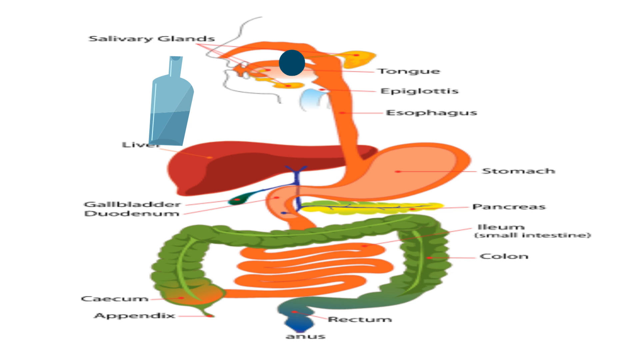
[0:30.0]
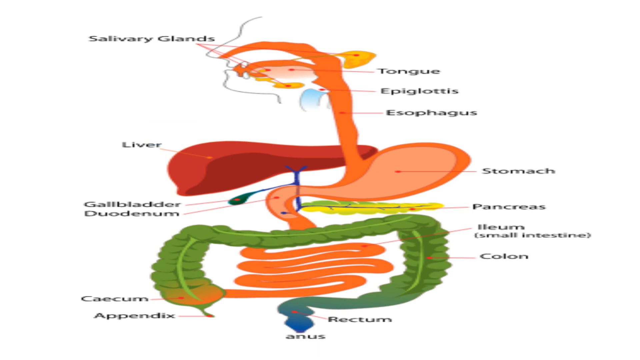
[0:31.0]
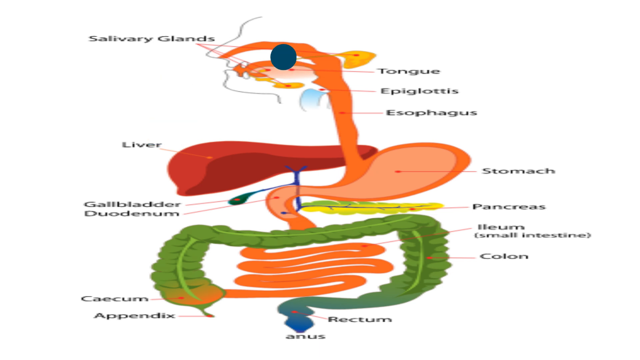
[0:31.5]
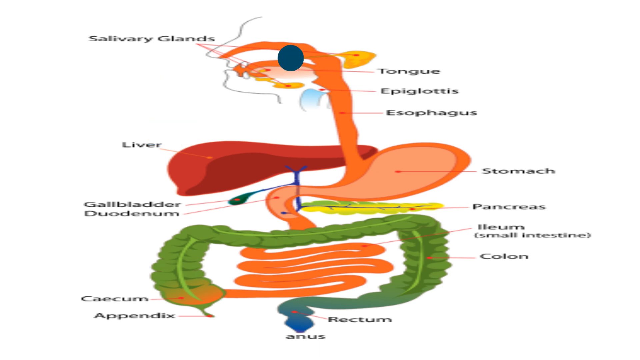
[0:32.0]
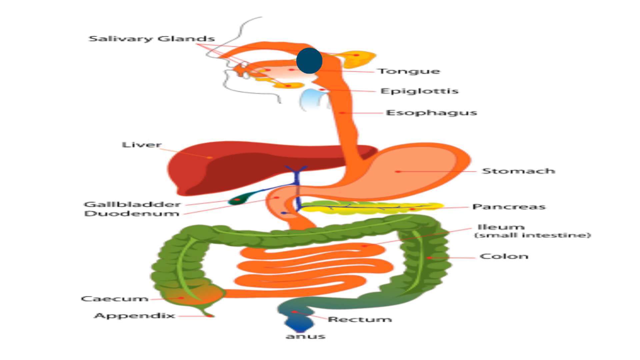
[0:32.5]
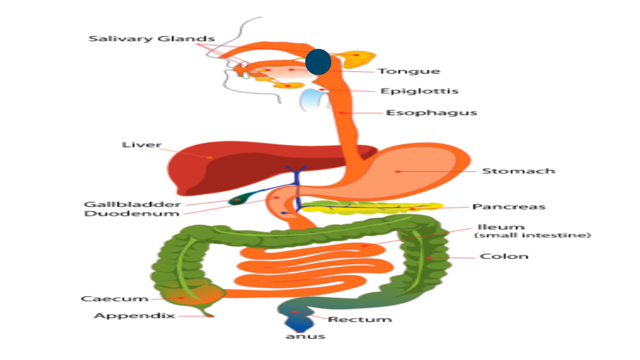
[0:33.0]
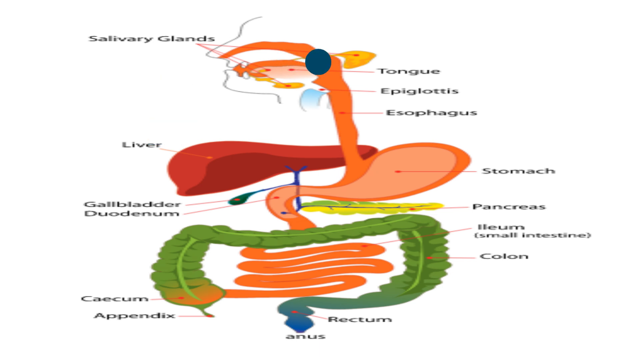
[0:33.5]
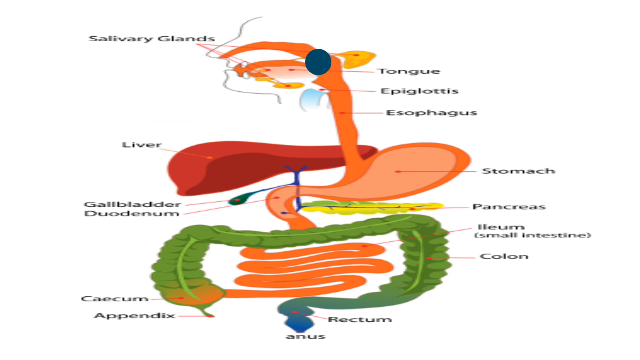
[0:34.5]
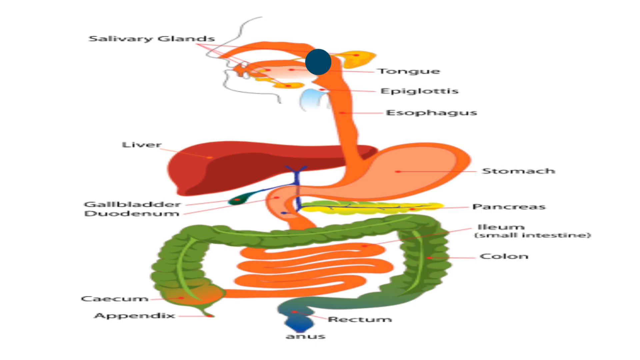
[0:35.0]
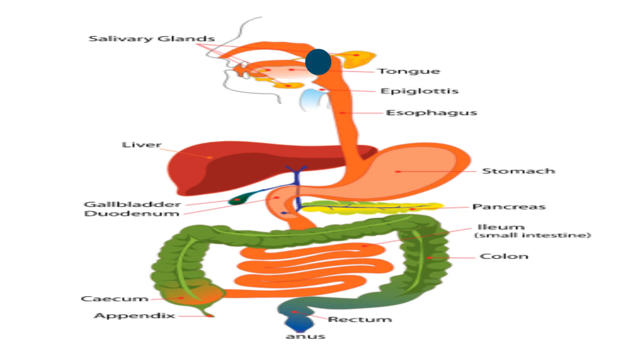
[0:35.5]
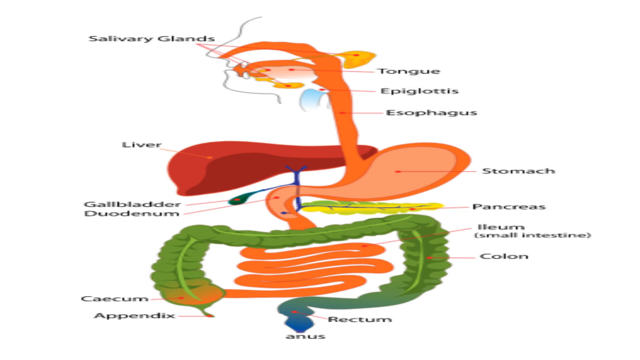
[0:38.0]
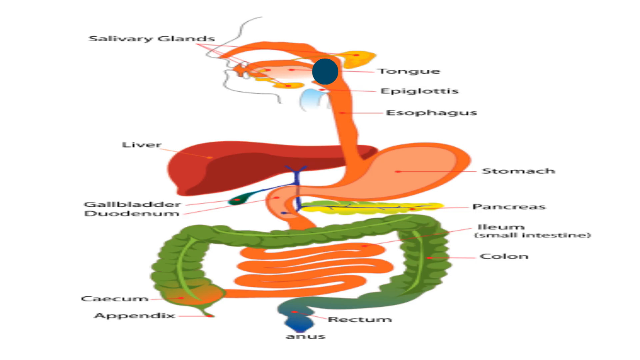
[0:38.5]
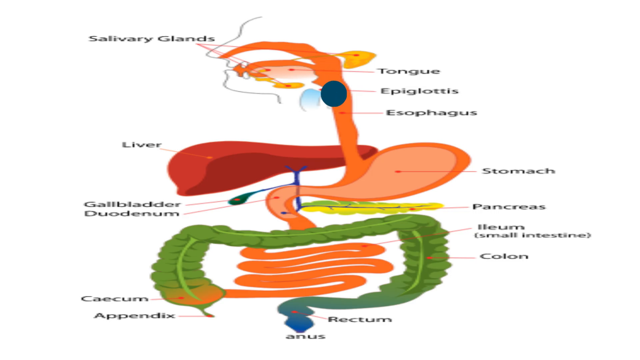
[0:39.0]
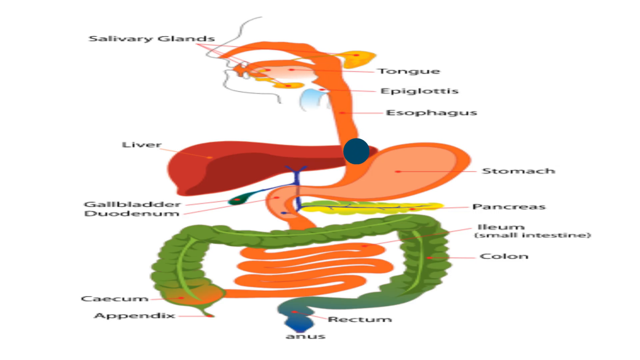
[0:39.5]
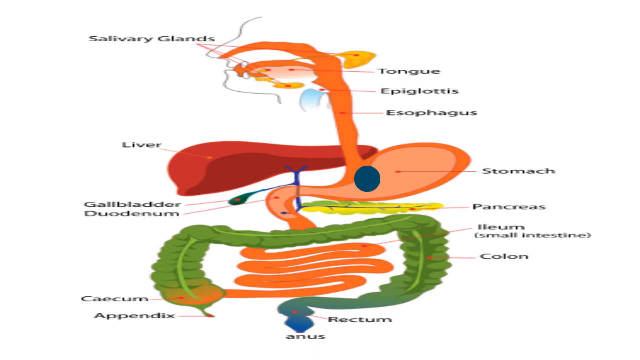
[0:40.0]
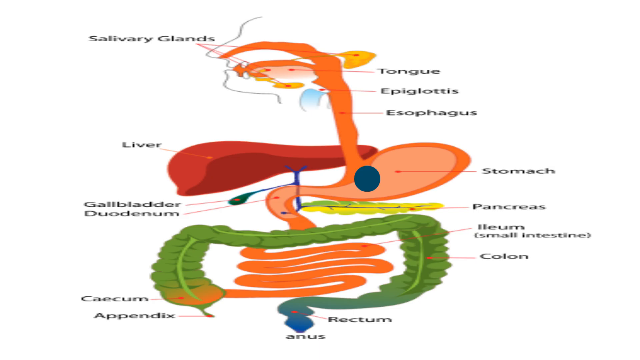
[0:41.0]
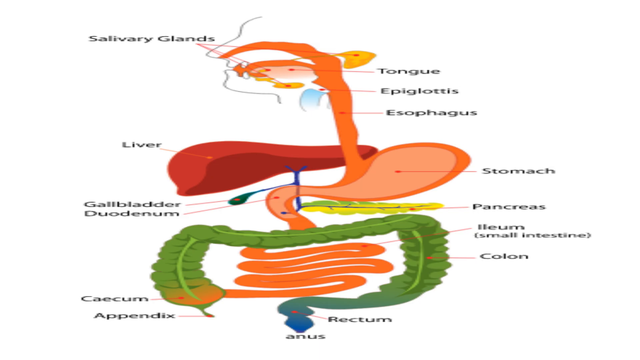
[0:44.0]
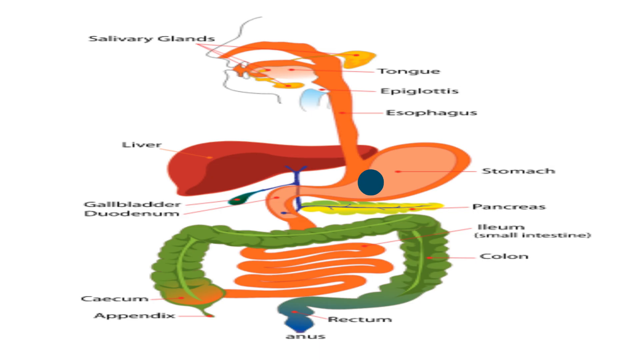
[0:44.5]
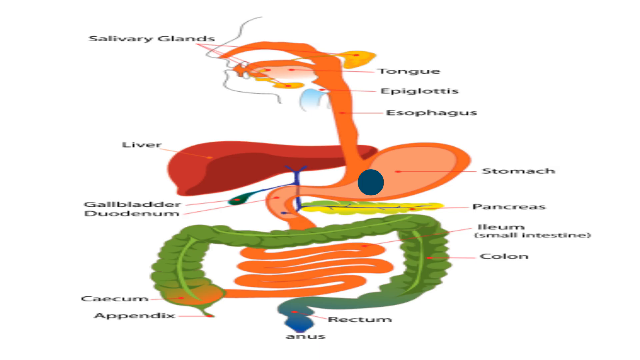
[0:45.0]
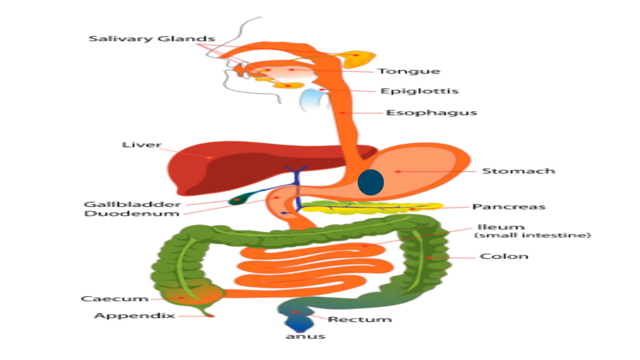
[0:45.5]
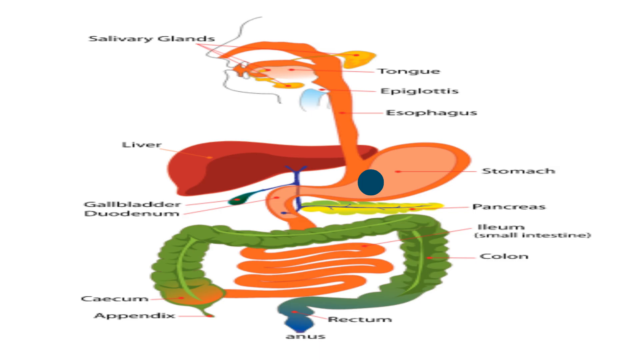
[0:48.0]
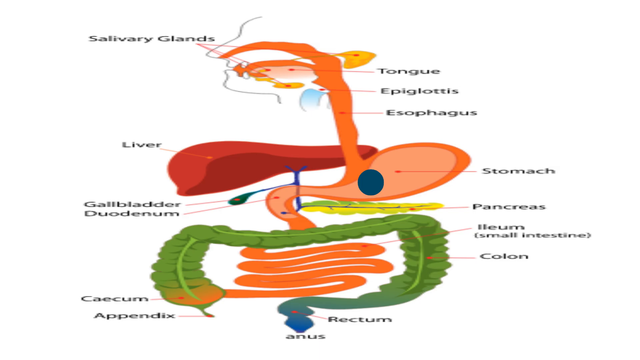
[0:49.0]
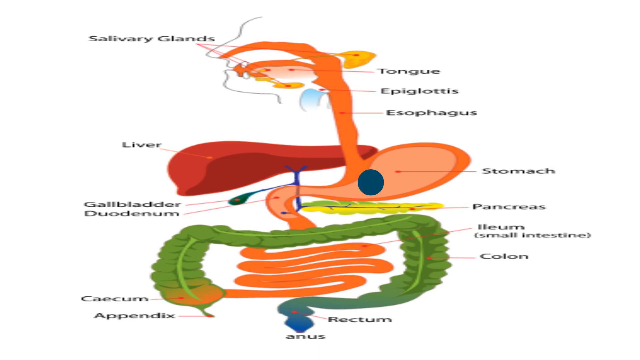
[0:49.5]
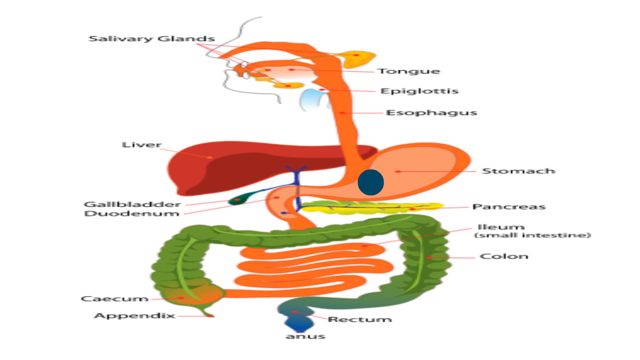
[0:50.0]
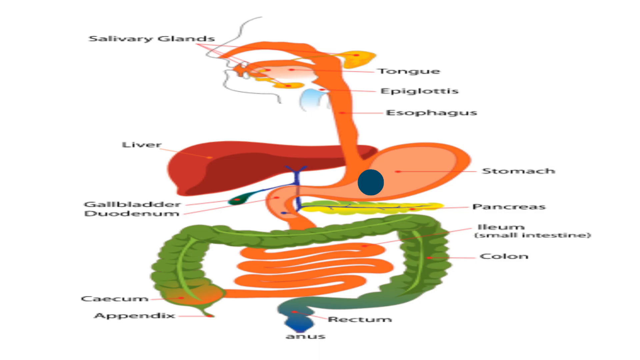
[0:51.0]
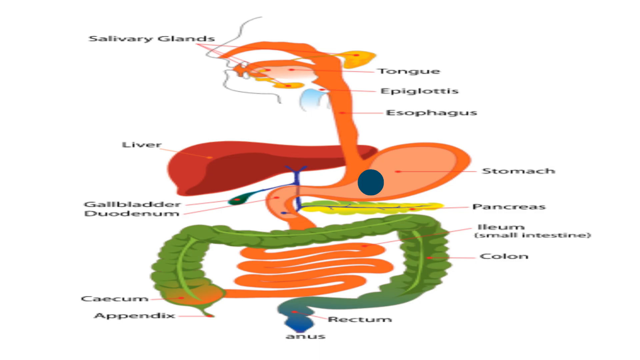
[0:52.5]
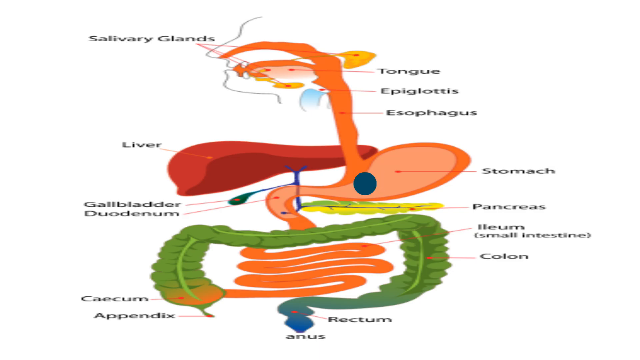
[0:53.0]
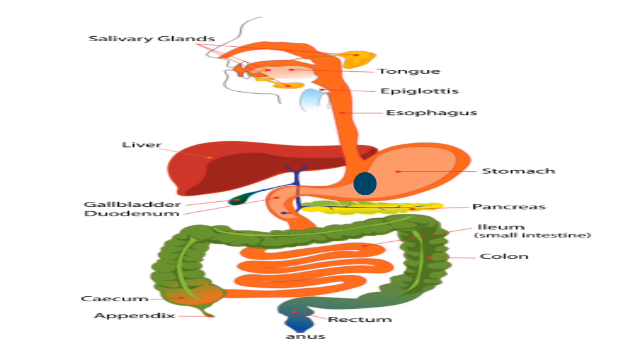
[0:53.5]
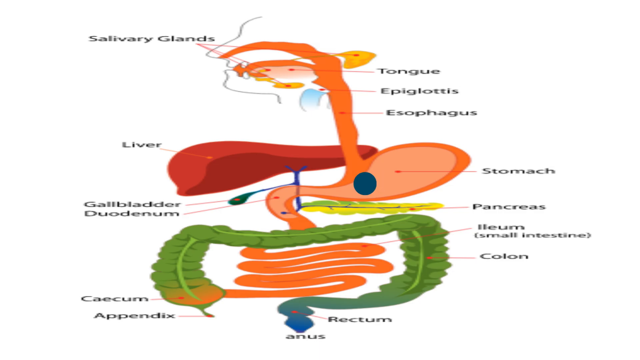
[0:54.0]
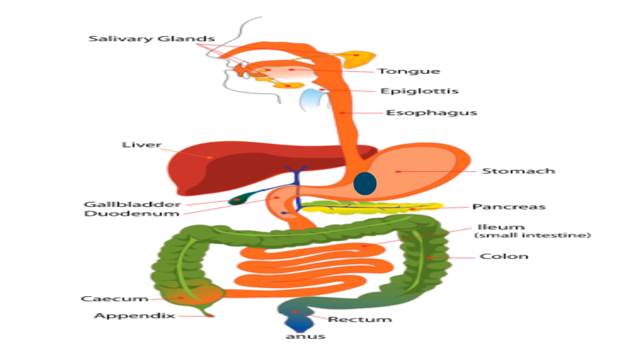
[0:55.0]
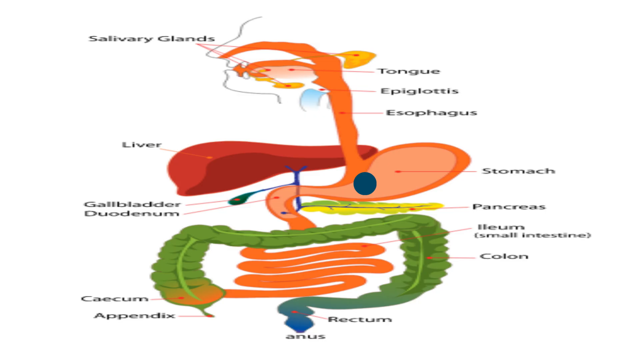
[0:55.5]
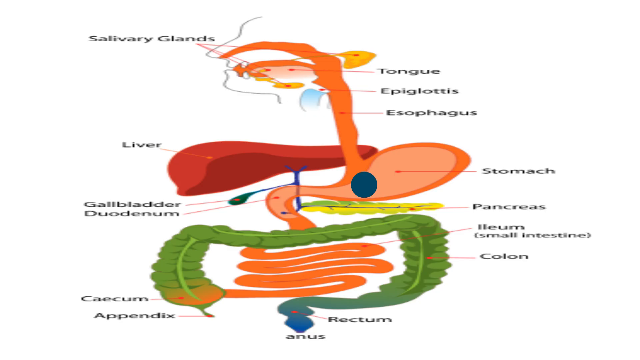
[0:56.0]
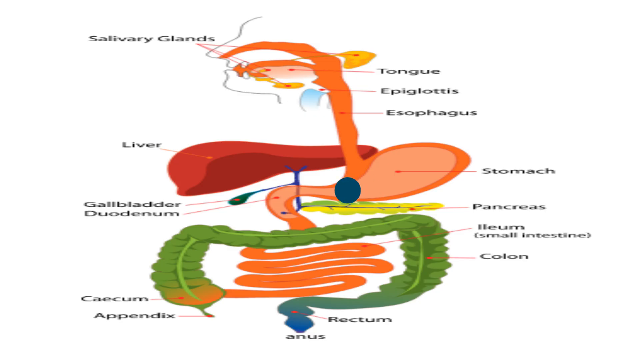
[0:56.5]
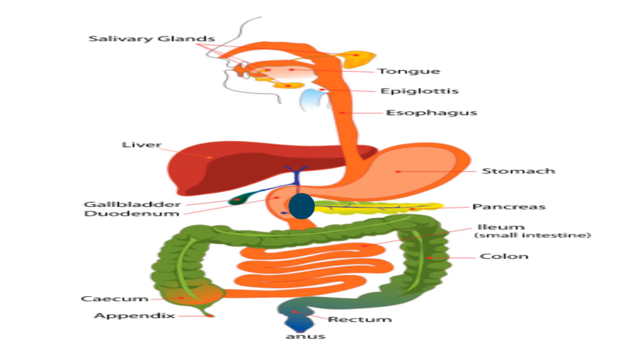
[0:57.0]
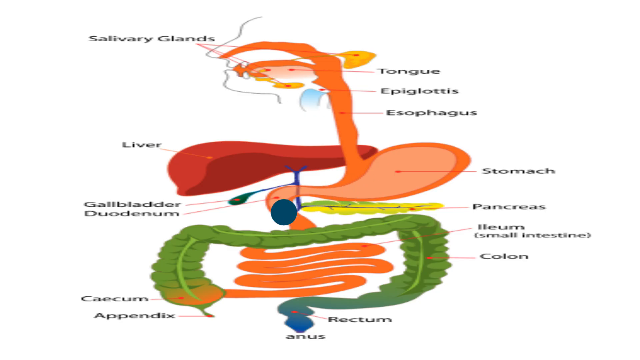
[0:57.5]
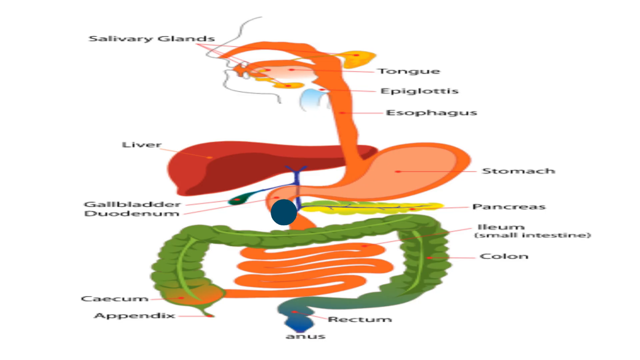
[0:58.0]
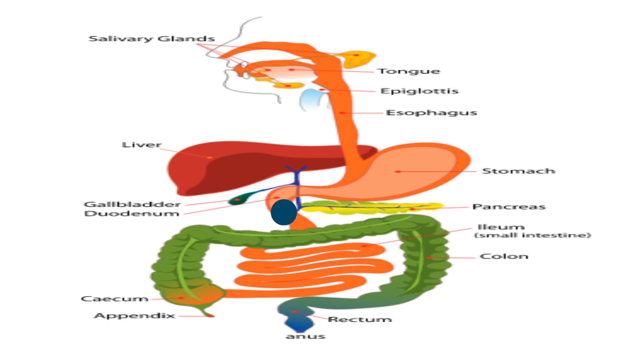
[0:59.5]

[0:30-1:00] A rather schematic representation of a gastrointestinal apparatus shows the various internal organs drawn in different colors, one after the other. Around the drawing are the names of the various components of the digestive system, connected to the drawing by red arrows. A cursor that looks like a blue circle is at the top of the frame. At first the small circle moves very slowly, staying at the top of the frame, then moves rather quickly down to reach the stomach. It stays still inside the stomach for a few seconds, now in the central part of the screen. In the last seconds, the little blue circle moves slightly to the left.